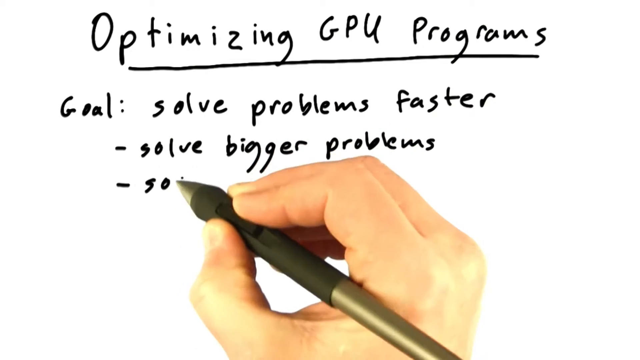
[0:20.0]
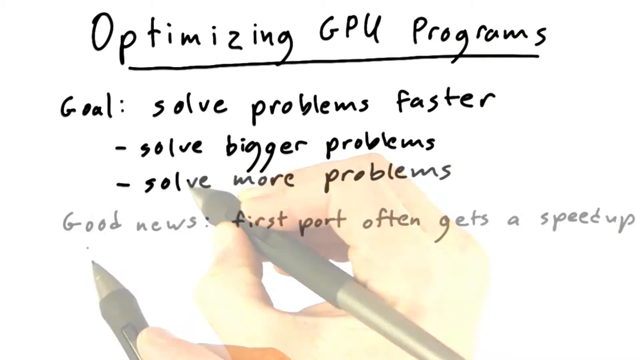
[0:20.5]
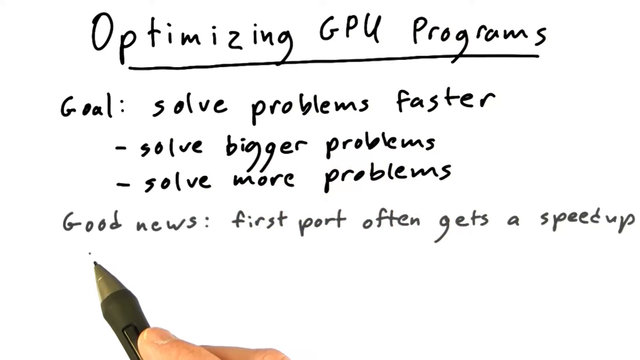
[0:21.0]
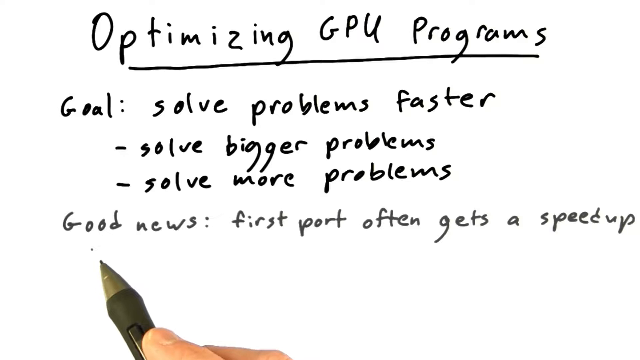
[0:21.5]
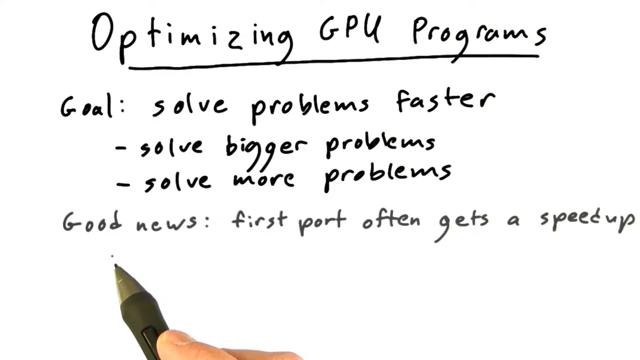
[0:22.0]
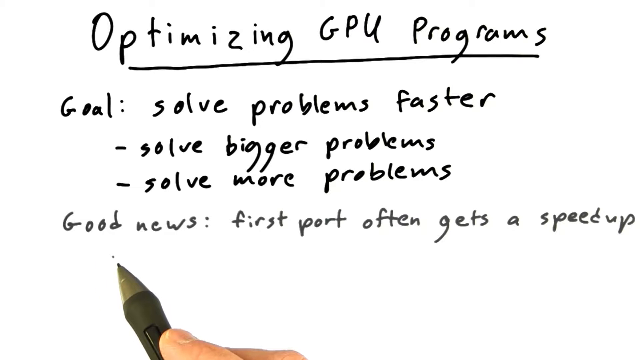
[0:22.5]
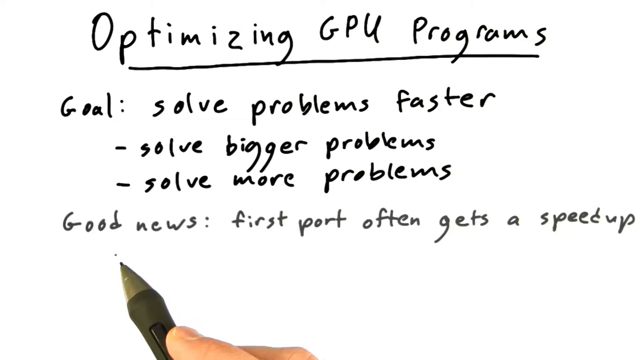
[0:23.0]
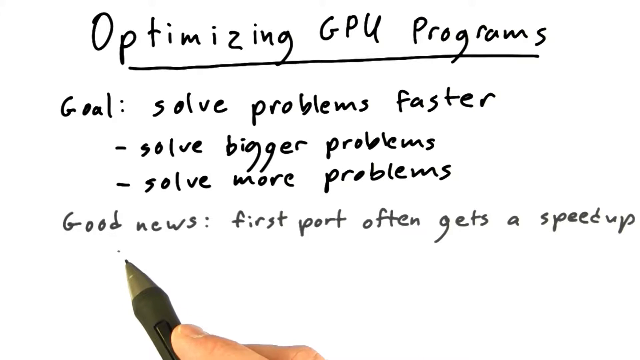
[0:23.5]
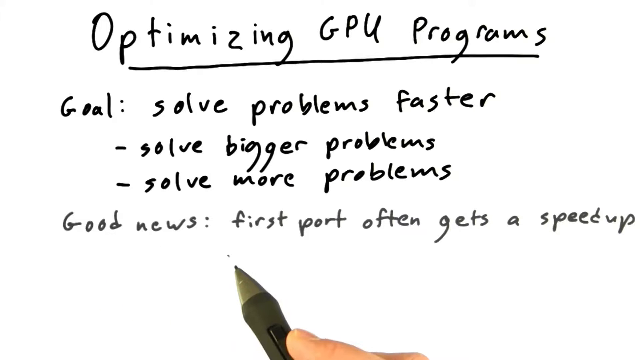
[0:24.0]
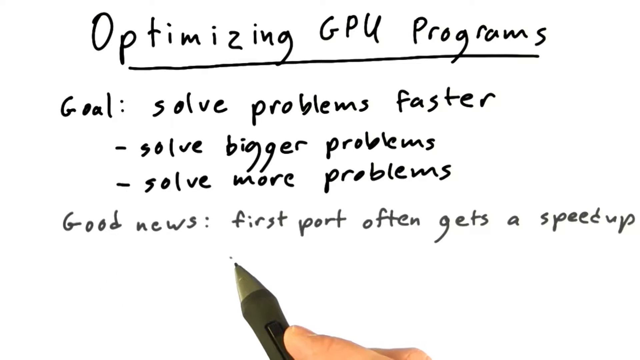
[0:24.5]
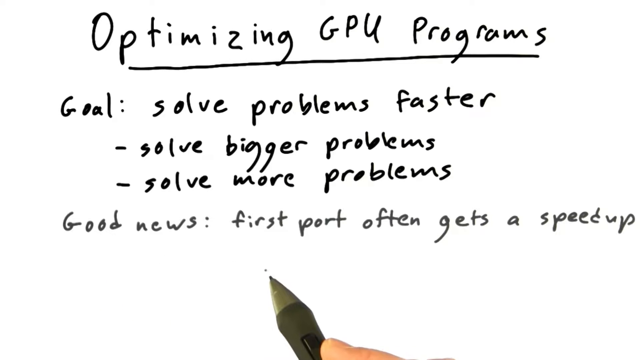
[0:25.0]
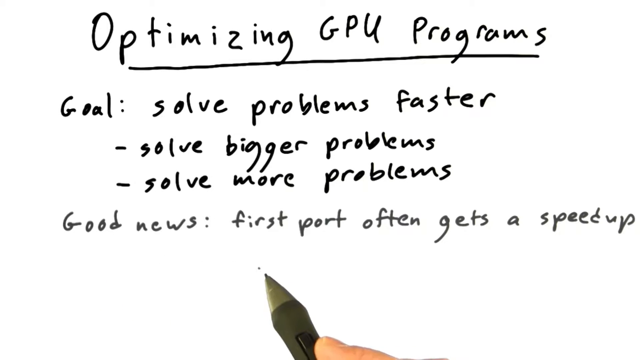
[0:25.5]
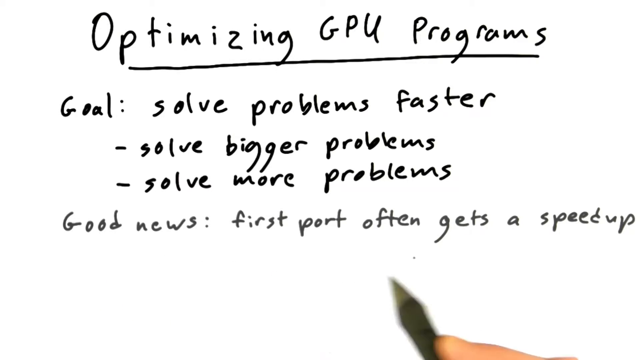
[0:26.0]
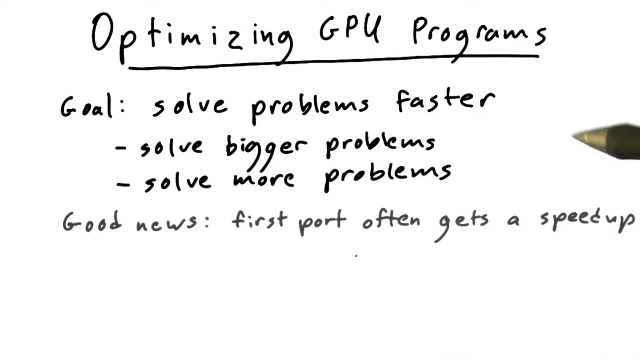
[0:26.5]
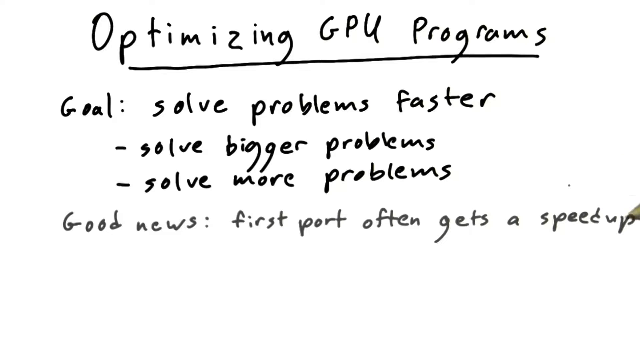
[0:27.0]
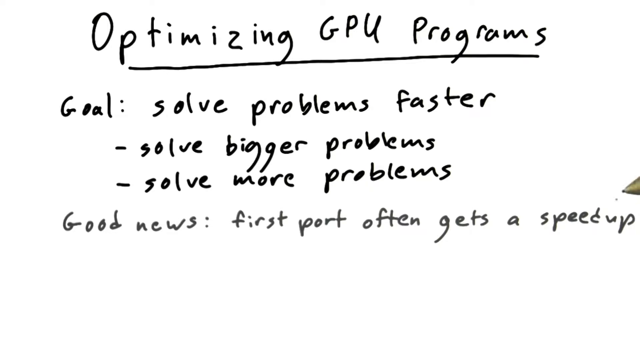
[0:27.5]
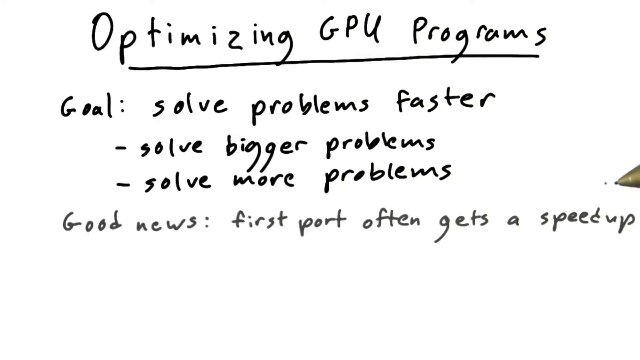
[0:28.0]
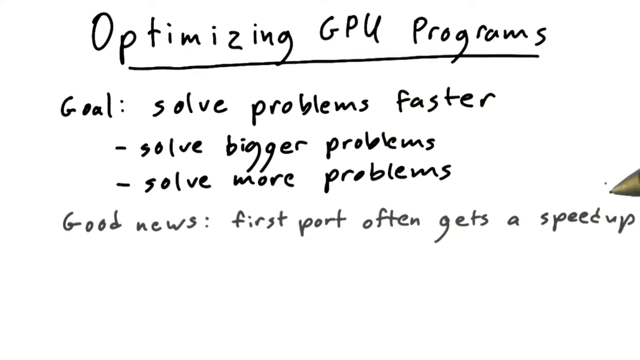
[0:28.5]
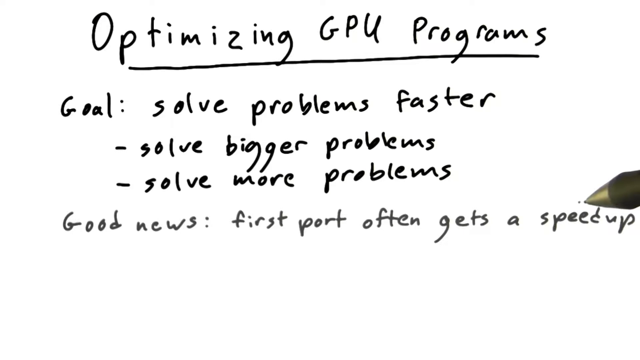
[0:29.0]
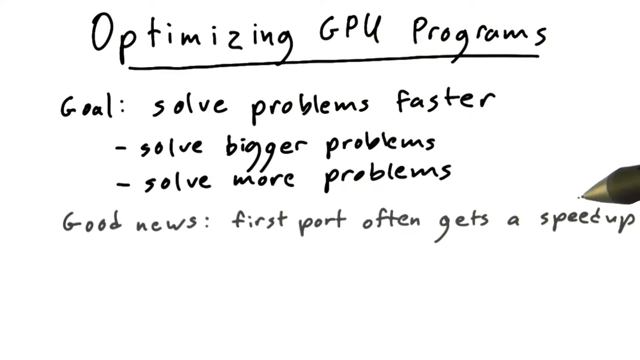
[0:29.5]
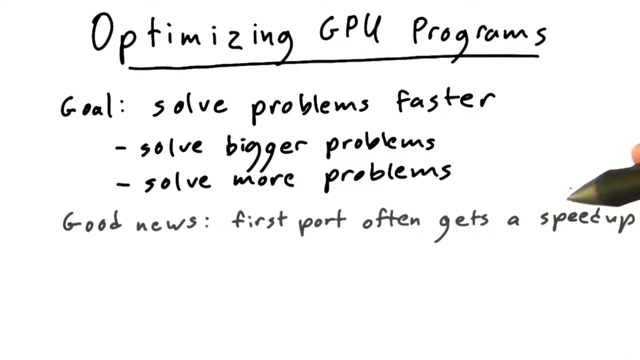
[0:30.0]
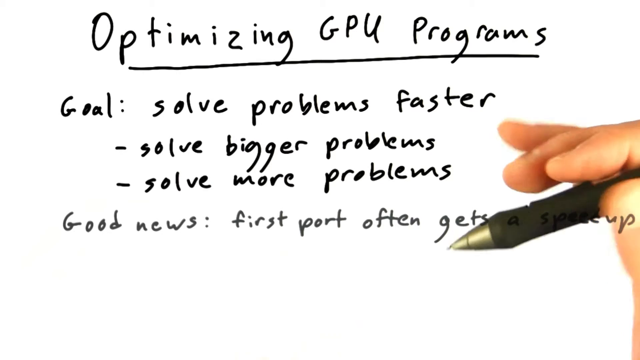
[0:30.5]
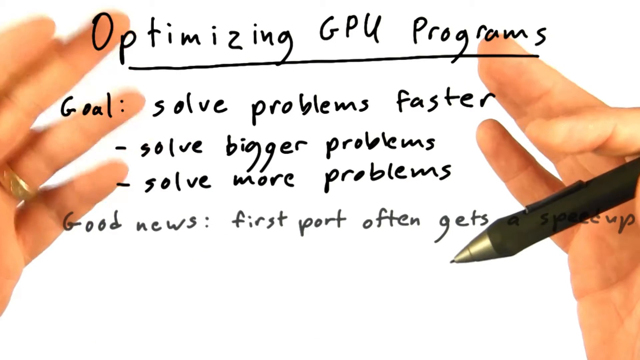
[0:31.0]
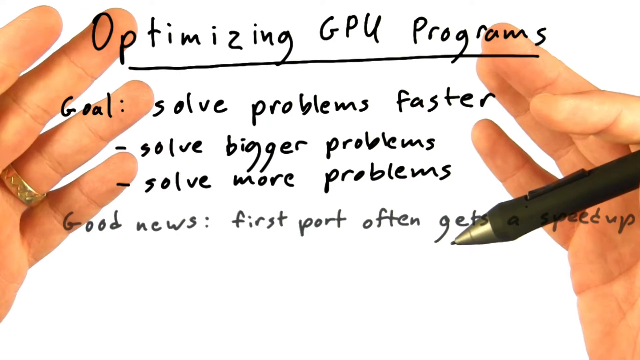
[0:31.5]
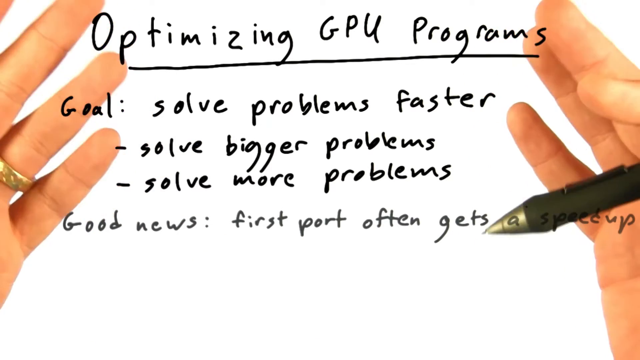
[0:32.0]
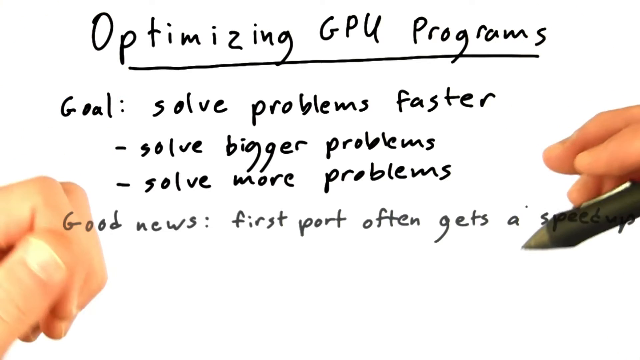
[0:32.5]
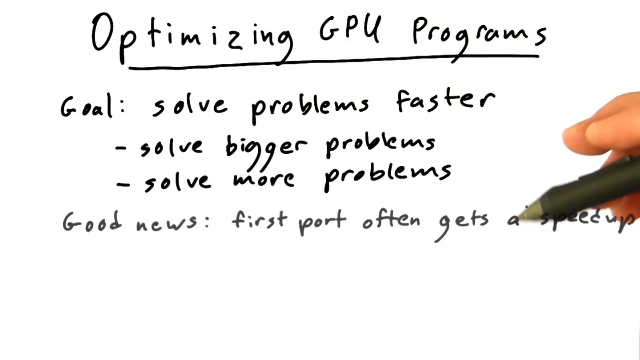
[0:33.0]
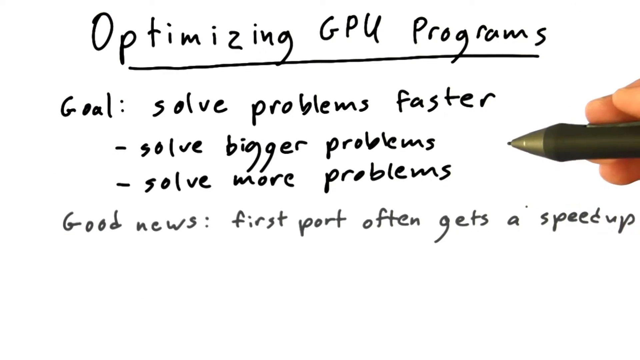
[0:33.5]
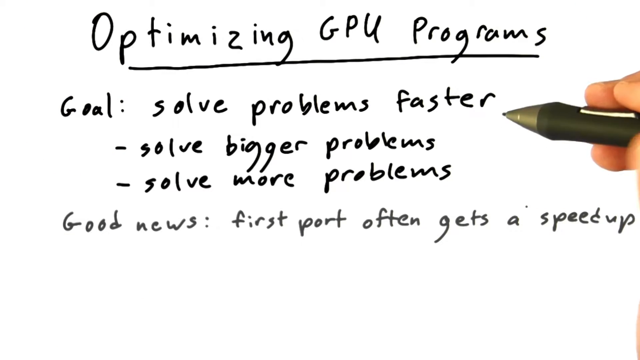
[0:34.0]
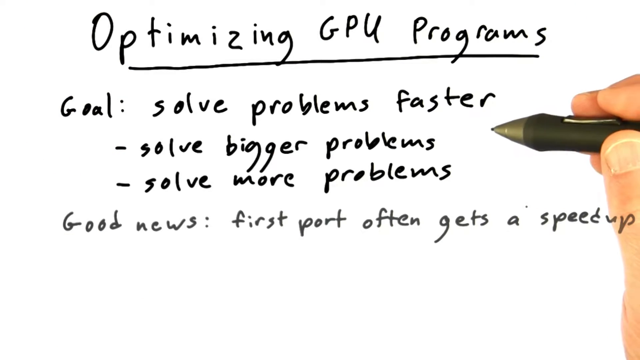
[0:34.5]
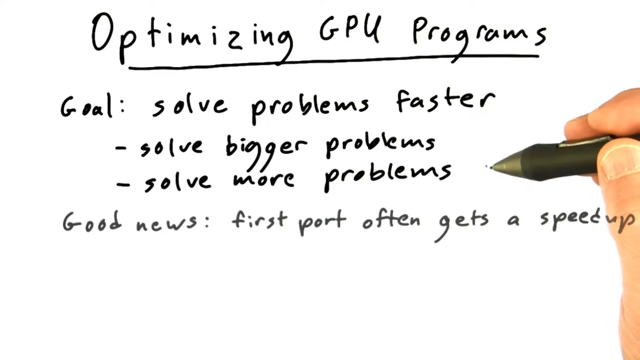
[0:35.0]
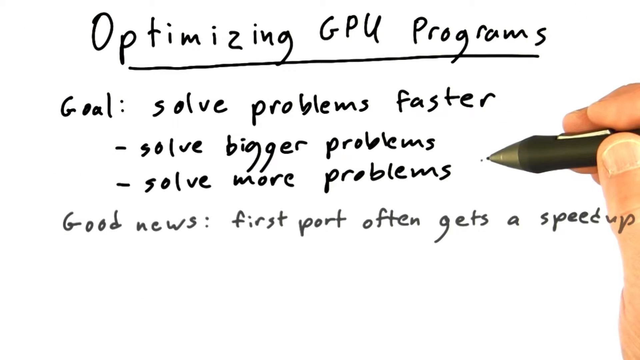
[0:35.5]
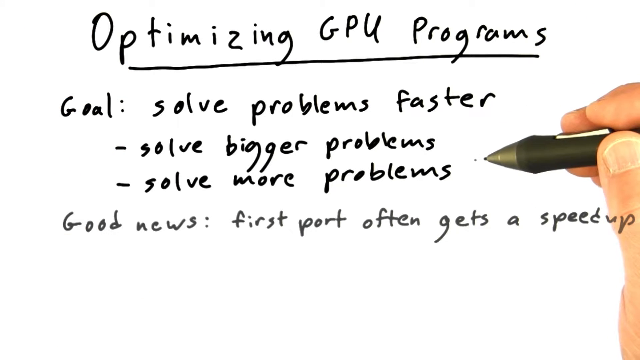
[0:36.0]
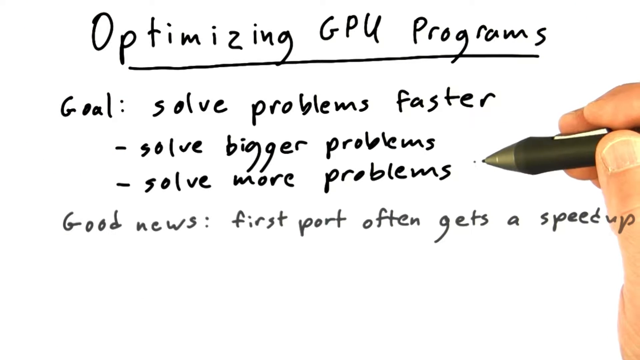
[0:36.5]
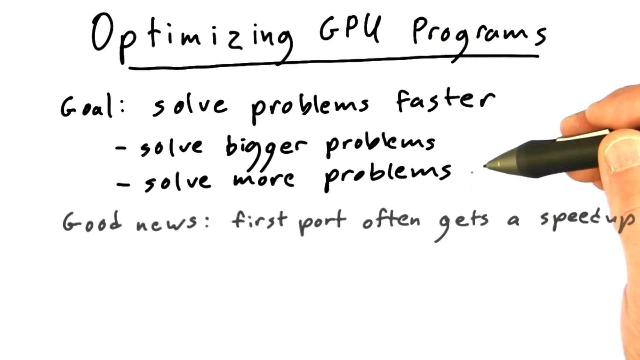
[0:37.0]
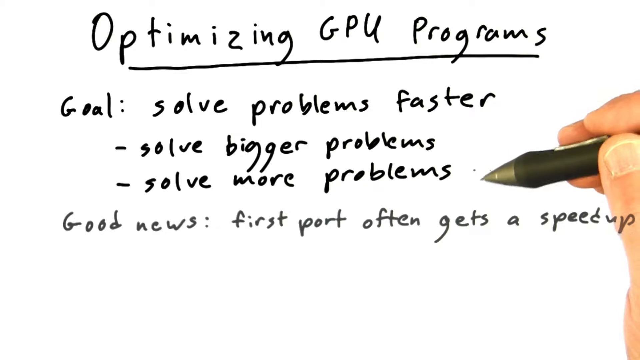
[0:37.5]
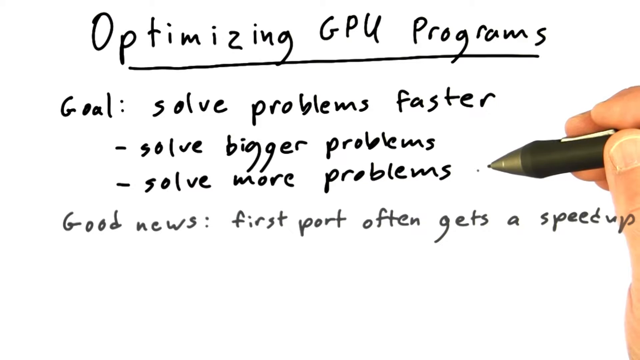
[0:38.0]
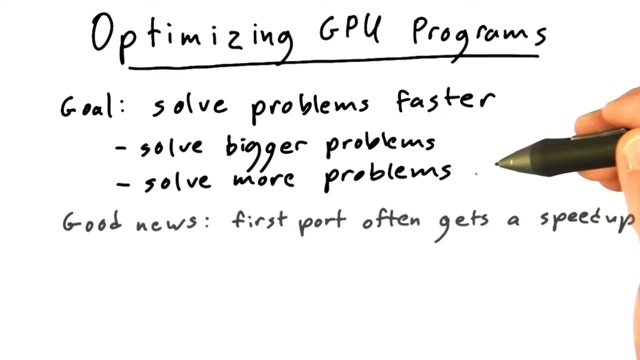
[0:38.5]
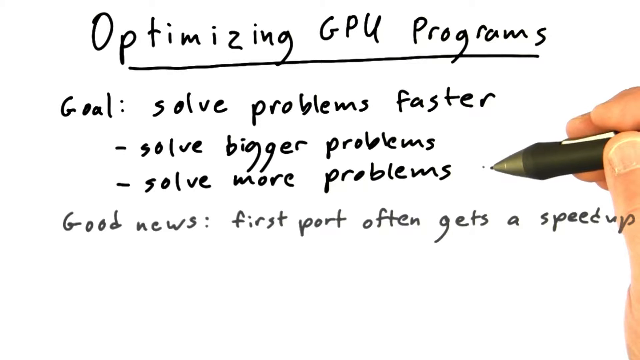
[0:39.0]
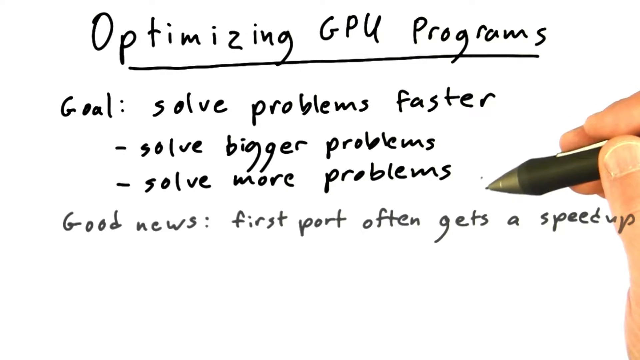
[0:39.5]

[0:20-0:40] The words "/ solve more problems" have been written, followed by "good news .. first part often gets a speed up", which is written in a lighter grey than the words above. The person's hand has disappeared down at the bottom of the screen, leaving only a finger holding parts of the pen, with about a quarter of the pen tip visible. The pen moves from the left of the screen to the right, then up to the centre of the right-hand side, then back down to the bottom right corner, showing the thumb and two fingers holding it. The person then gestures, moving both hands to the sides of the screen, the left hand on the left side and the right hand on the right side, and spreads their fingers out toward the top. They clench their hands together again, then take hold of the pen with the right hand, clenching it with their fingers.